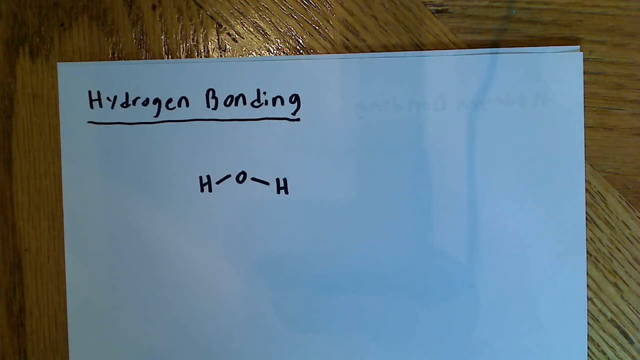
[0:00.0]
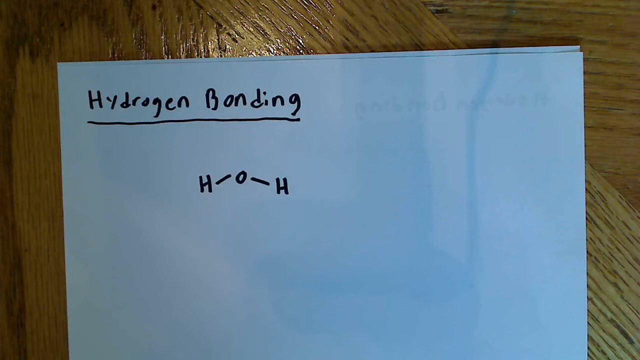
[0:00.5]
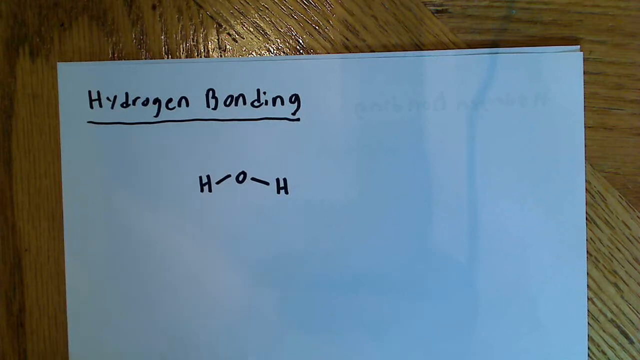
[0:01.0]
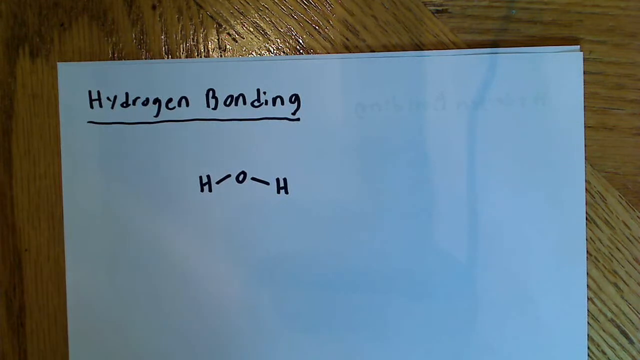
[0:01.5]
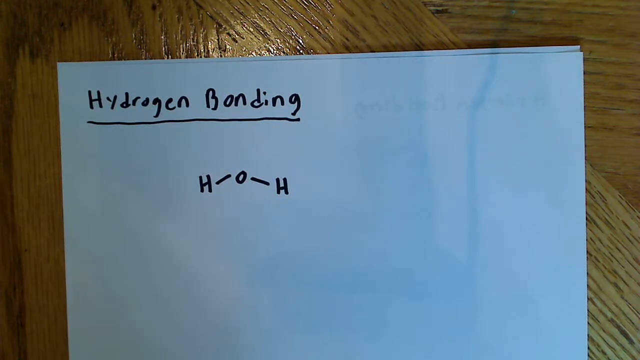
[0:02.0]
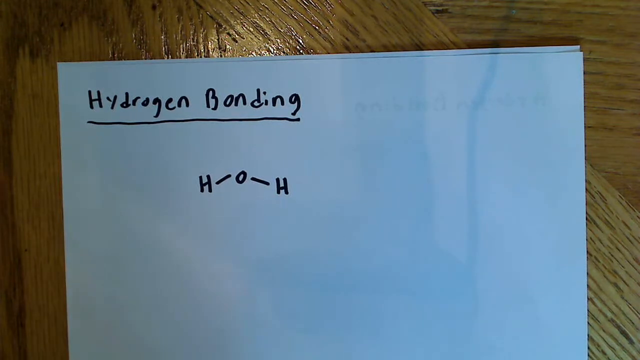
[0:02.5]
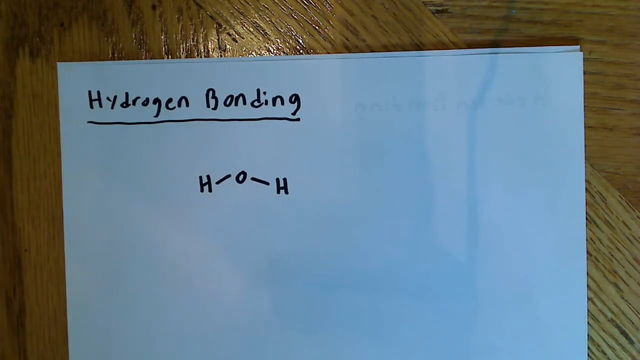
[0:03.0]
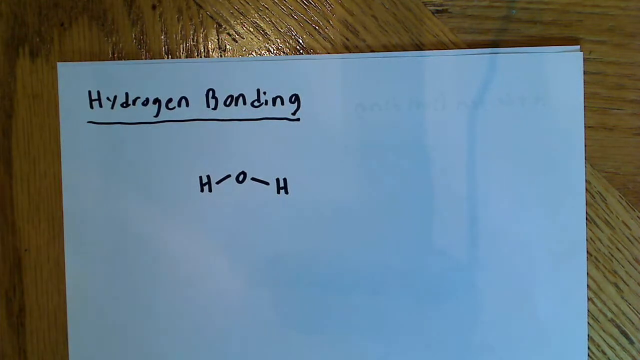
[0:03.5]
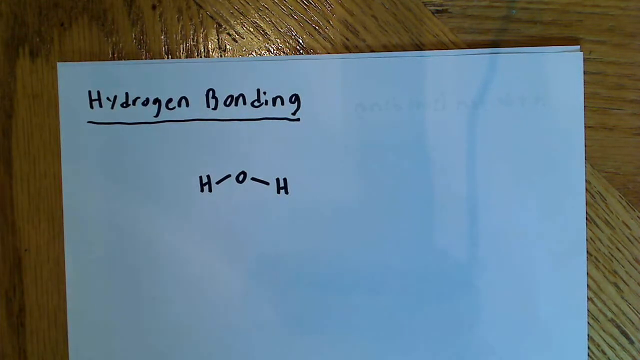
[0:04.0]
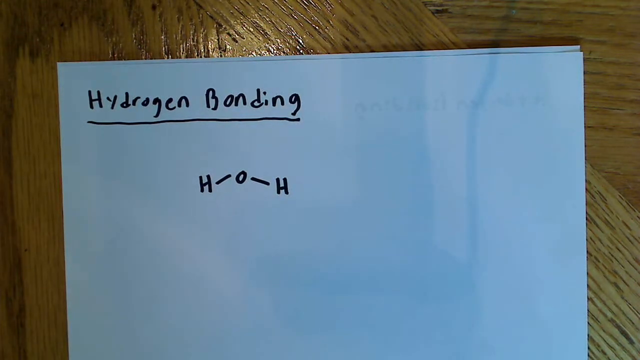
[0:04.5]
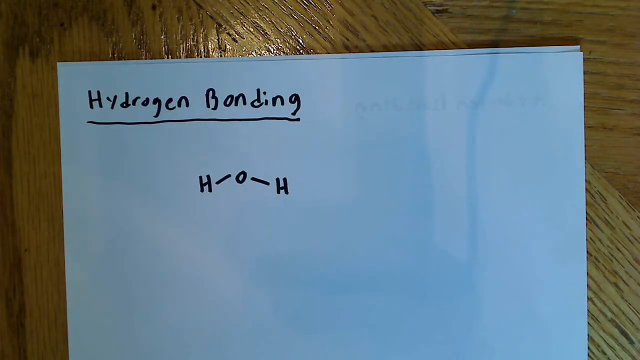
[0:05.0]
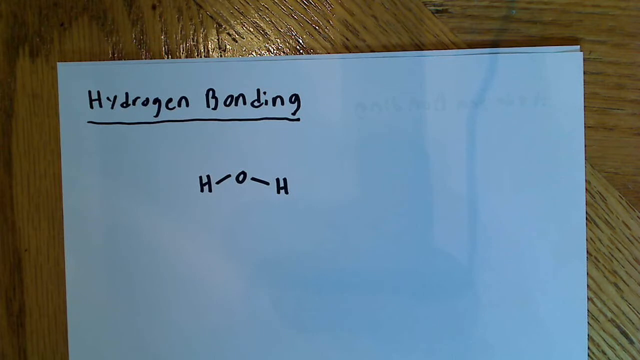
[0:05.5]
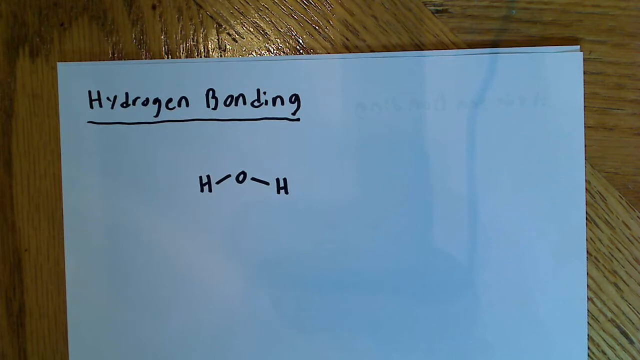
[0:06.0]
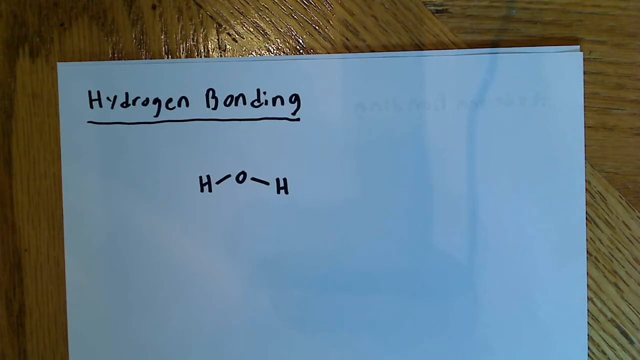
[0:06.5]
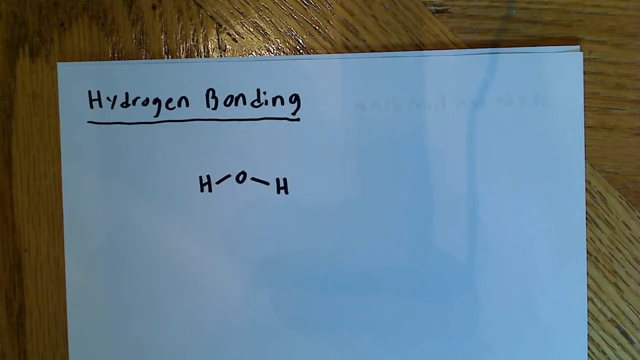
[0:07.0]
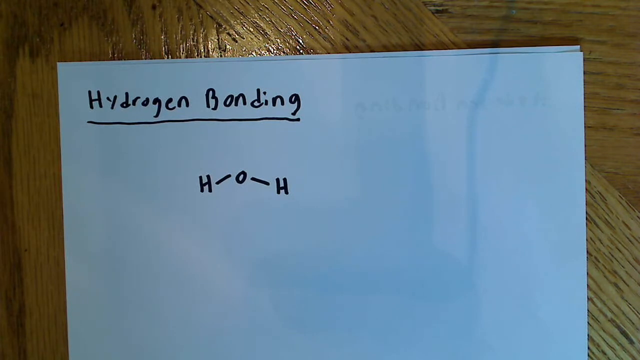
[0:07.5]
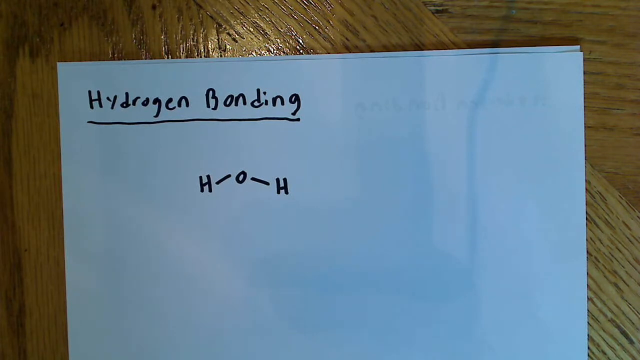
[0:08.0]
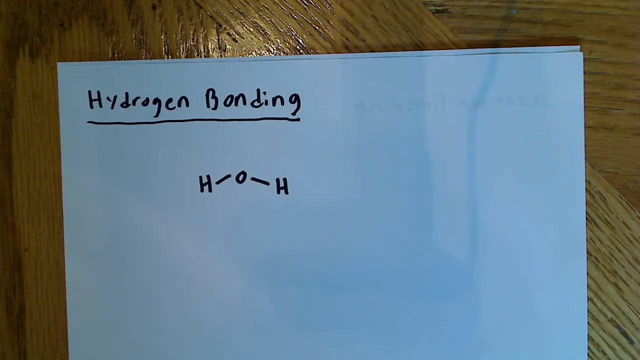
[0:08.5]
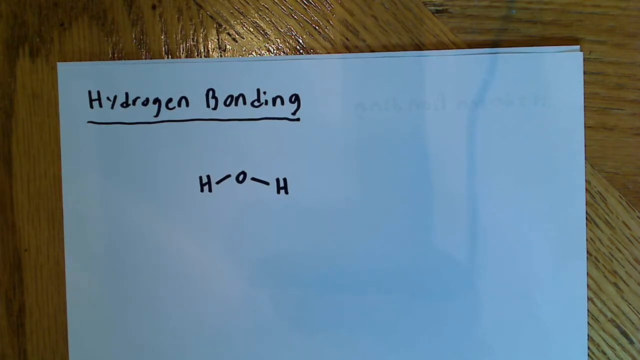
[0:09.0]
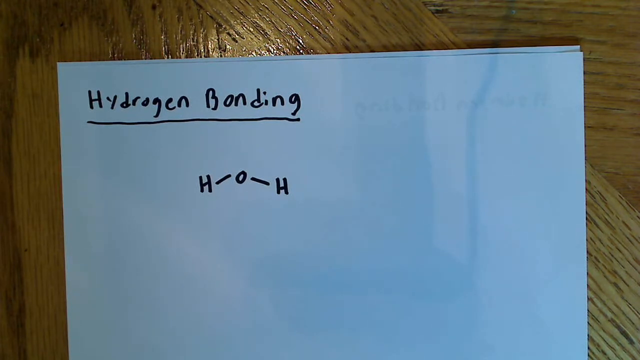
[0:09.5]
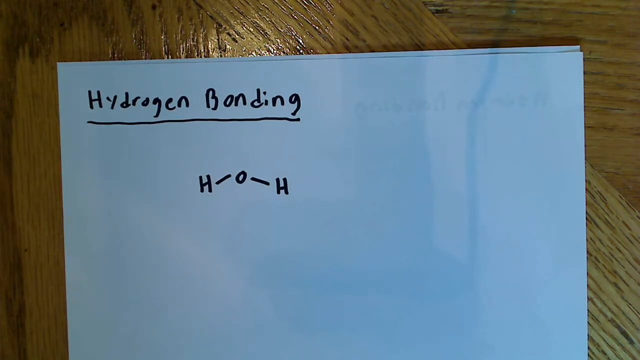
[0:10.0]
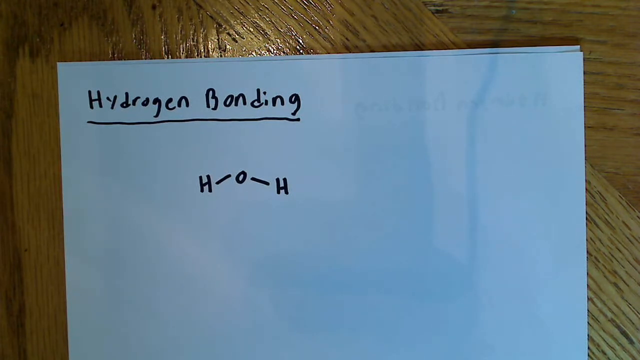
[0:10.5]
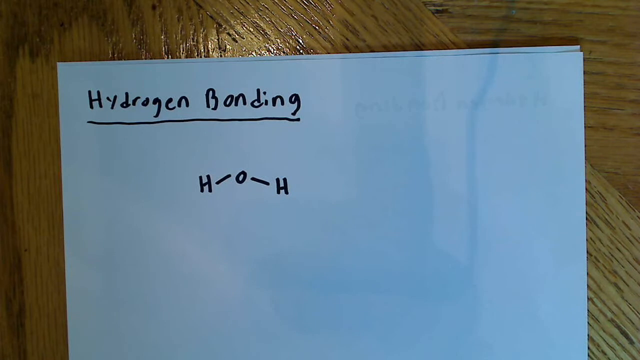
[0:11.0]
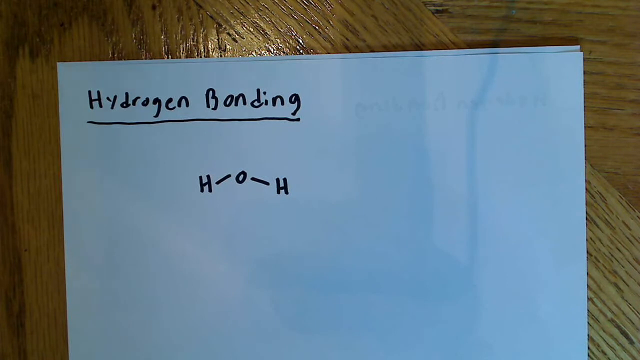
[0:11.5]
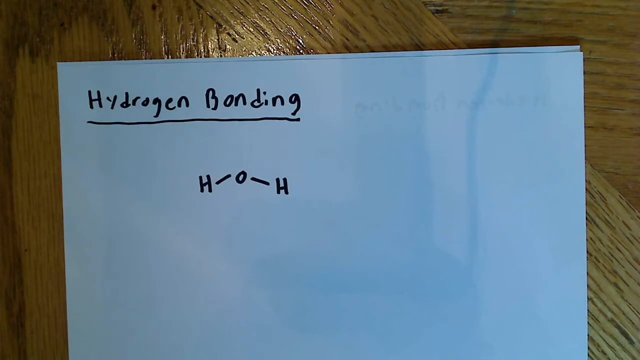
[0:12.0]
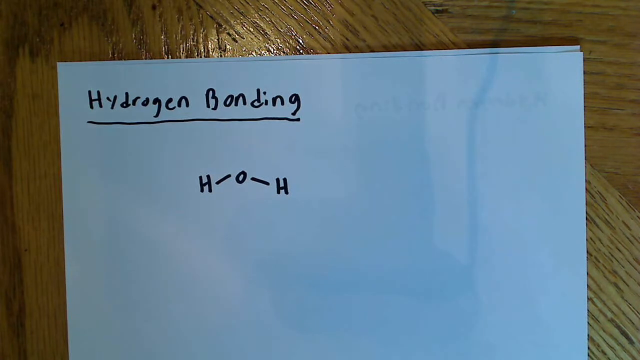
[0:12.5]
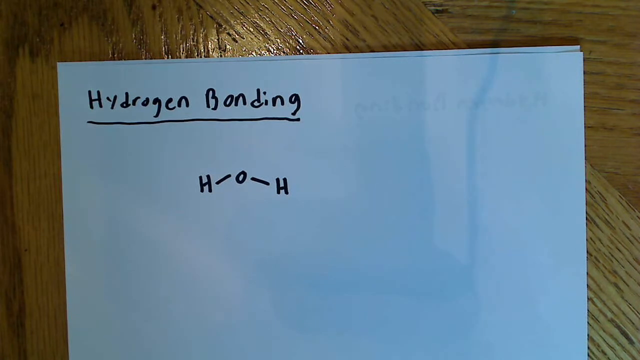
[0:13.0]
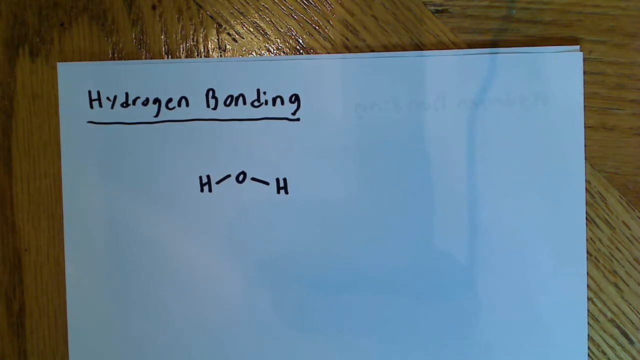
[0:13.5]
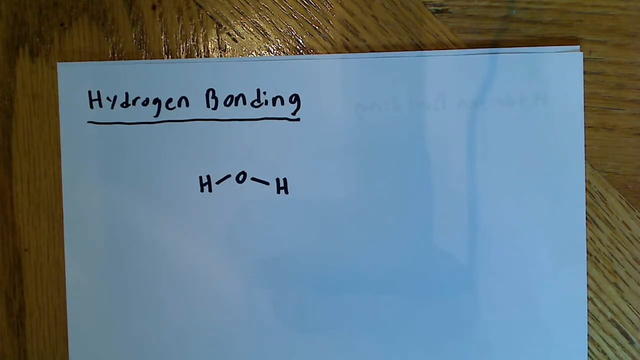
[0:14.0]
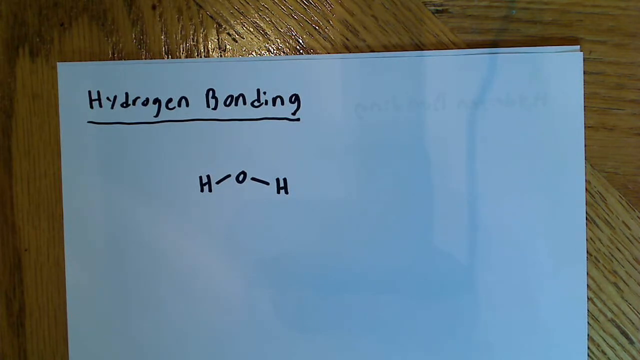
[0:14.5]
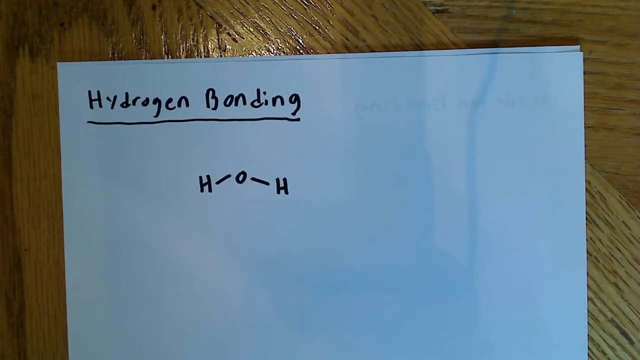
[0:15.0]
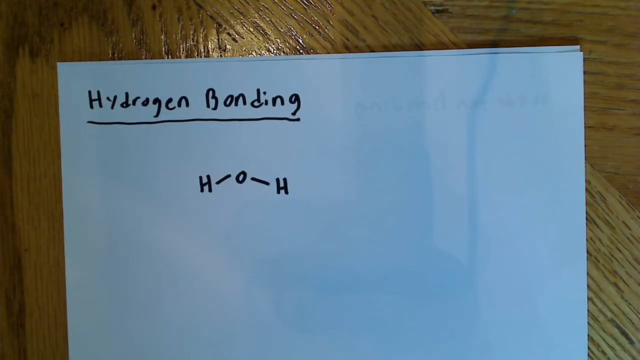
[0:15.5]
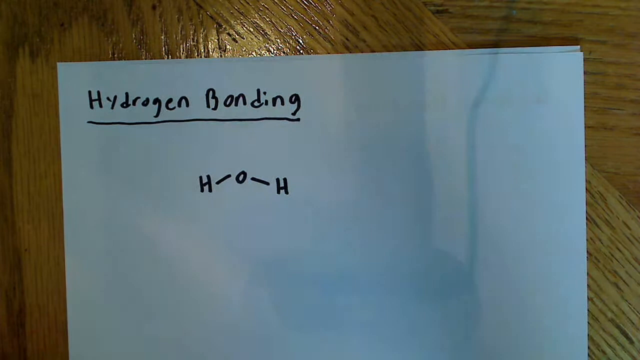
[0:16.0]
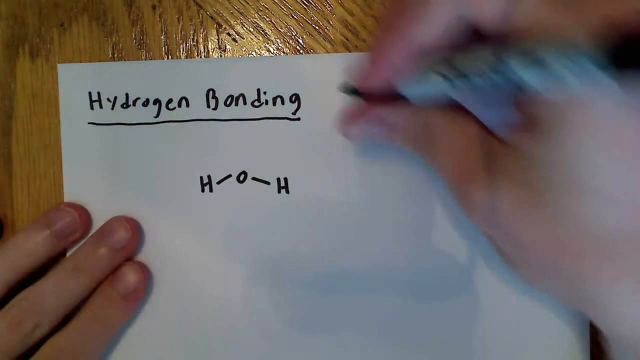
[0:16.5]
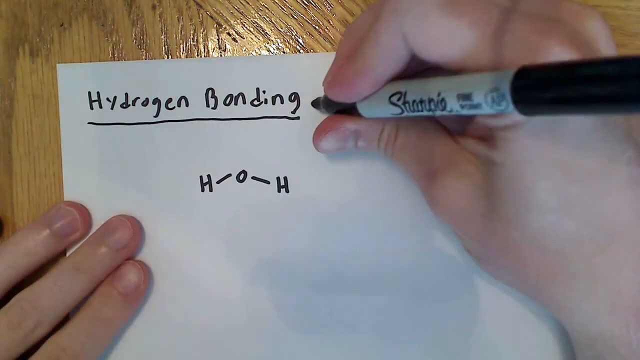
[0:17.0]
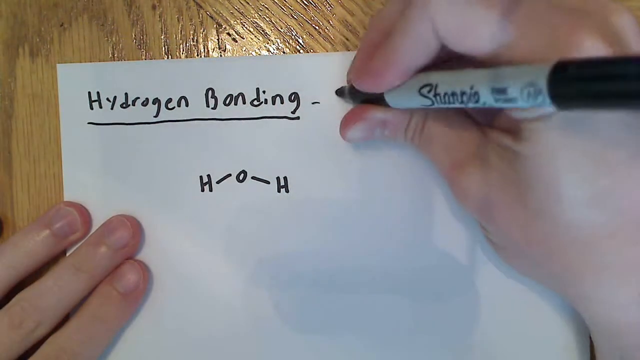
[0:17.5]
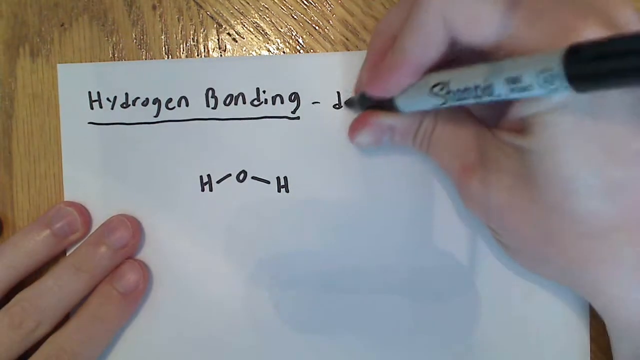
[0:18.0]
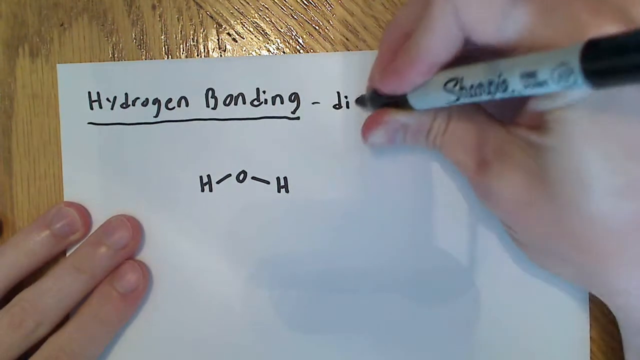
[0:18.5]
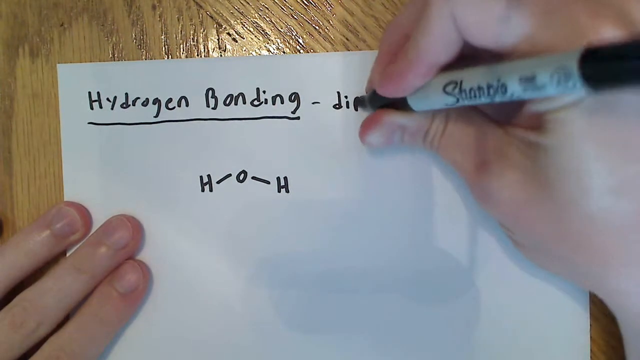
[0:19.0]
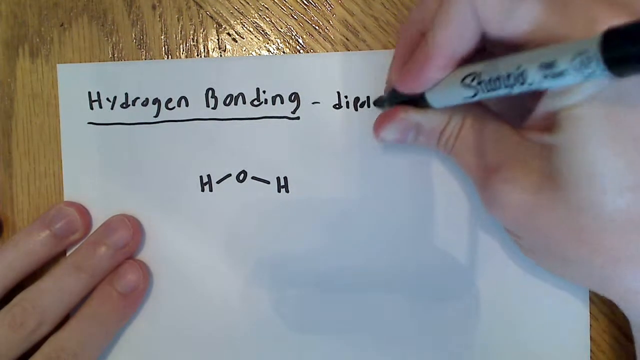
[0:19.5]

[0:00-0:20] Two pieces of typing paper lie on a wooden surface, like the top of a table, with a heavy wood grain. On the top sheet, someone has written "hydrogen bonding" in Sharpie in the top left corner, with the H and the B capitalized, and it is underlined. Beneath it is a diagram of capital letters: an H, a dash angled slightly up, an O, a dash angled slightly down, and another H. Something also seems to be written in Sharpie on the back of this sheet, since faint ghosting shows through on the top right part of the paper, though it cannot be read. A heavy shadow covers the bottom of the screen, and some shadows sort of come across the paper from indirect light. Then a pair of hands comes into the frame, one on the left and one on the right; the person is white, and the right hand holds a Sharpie.